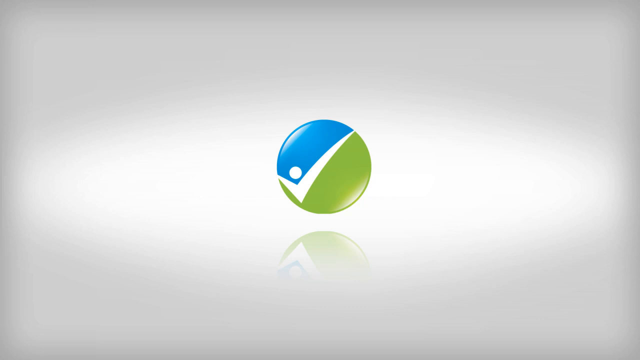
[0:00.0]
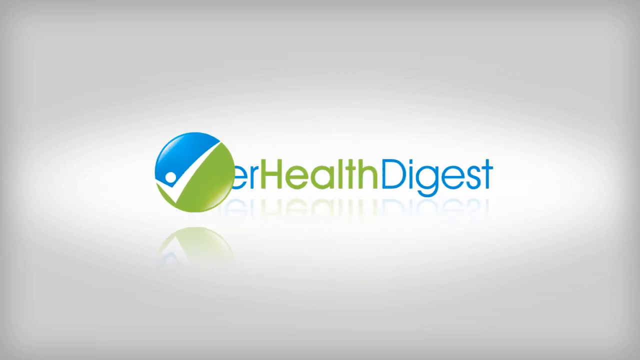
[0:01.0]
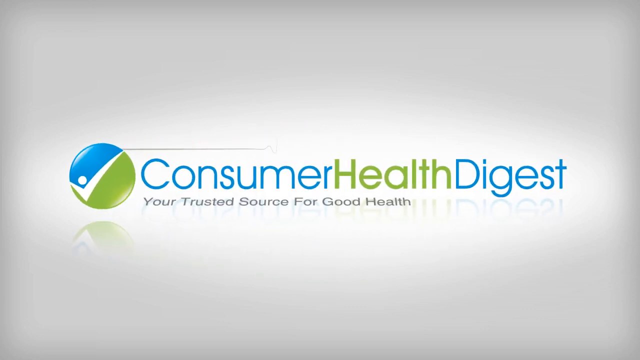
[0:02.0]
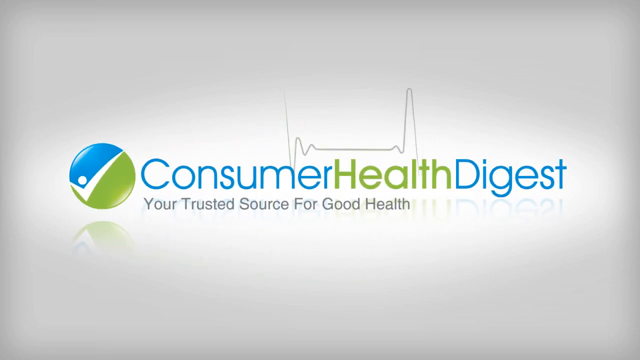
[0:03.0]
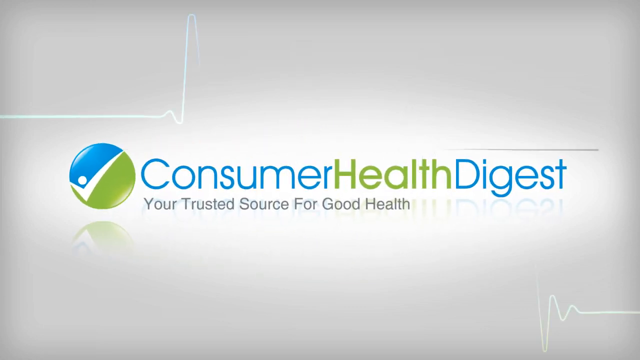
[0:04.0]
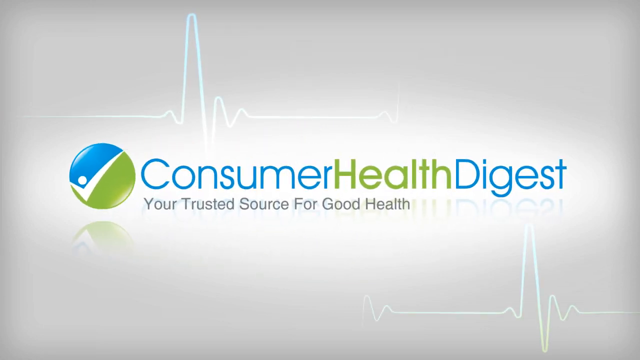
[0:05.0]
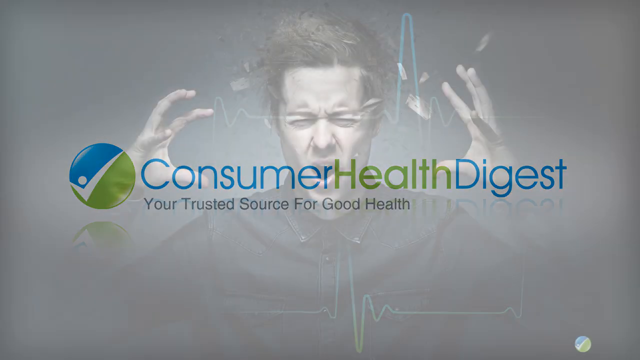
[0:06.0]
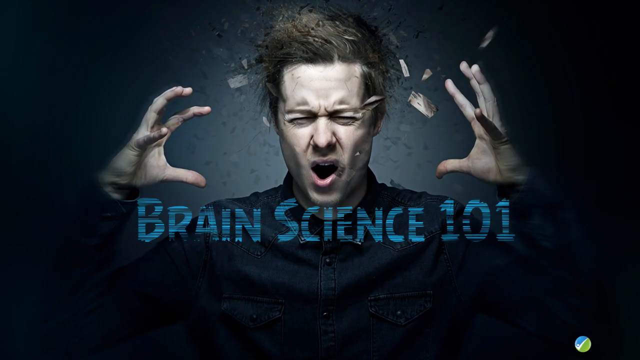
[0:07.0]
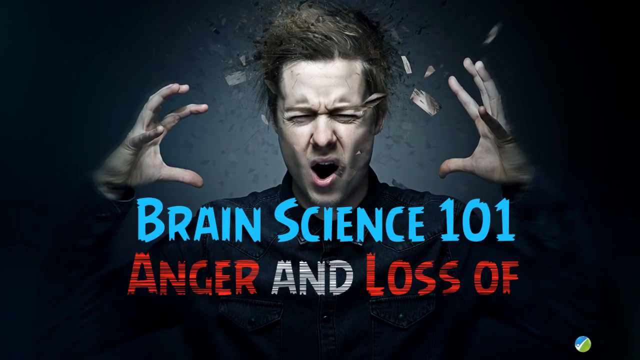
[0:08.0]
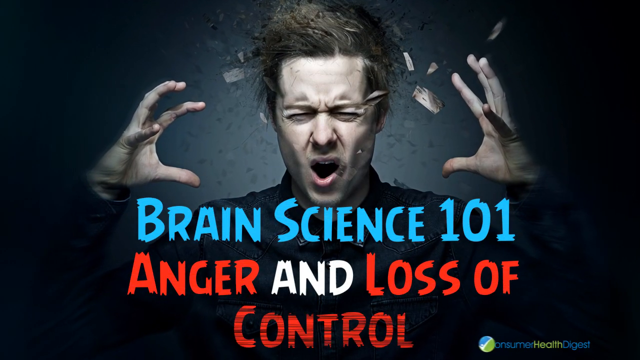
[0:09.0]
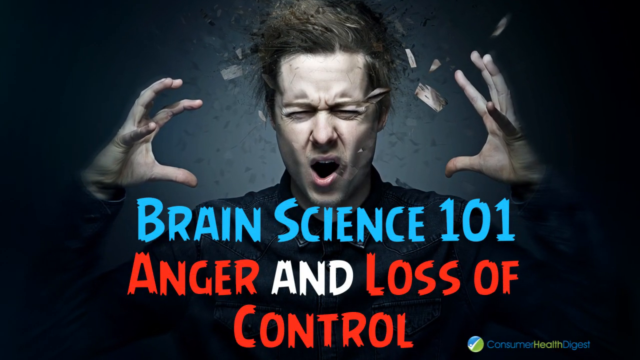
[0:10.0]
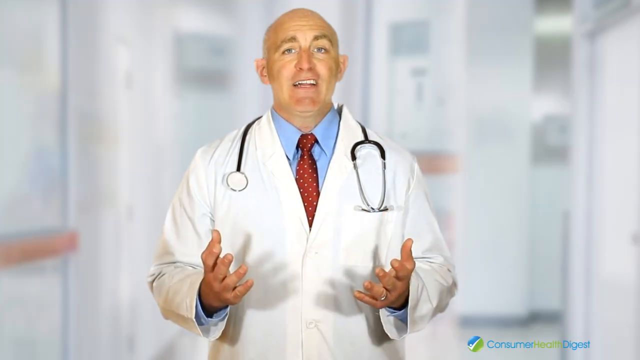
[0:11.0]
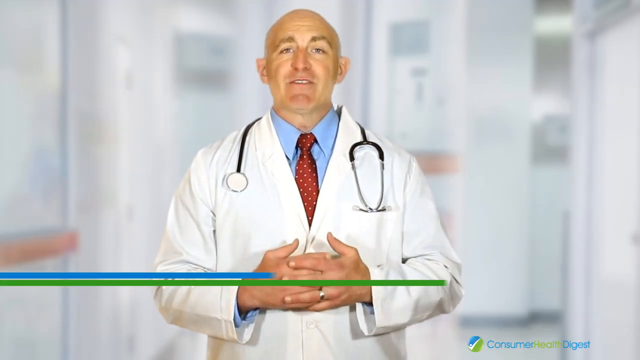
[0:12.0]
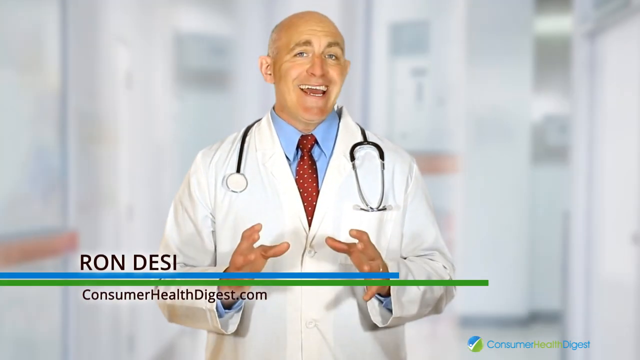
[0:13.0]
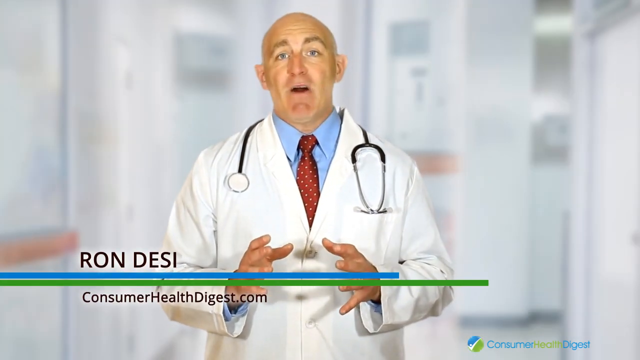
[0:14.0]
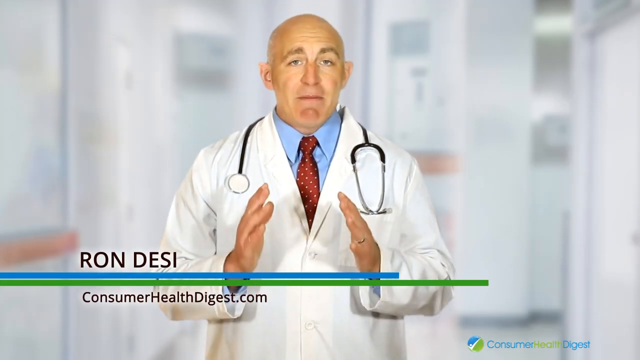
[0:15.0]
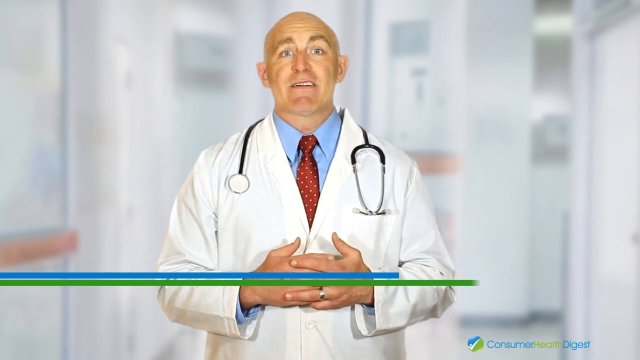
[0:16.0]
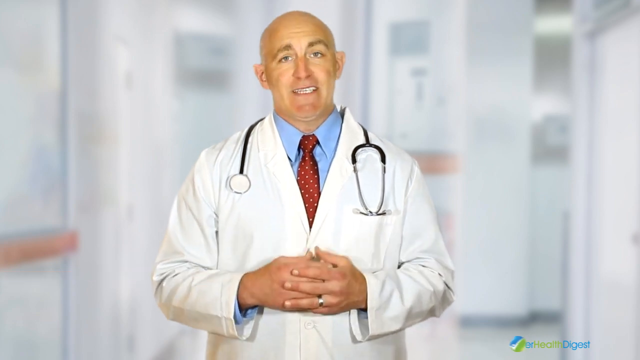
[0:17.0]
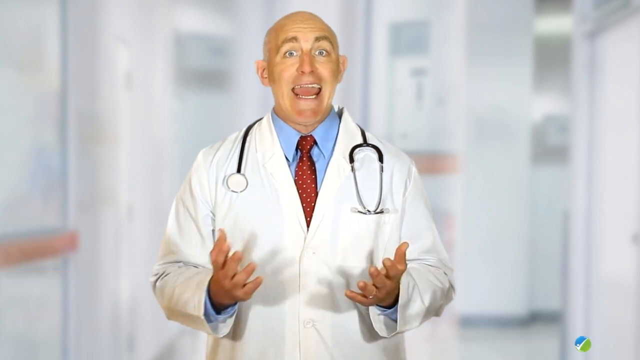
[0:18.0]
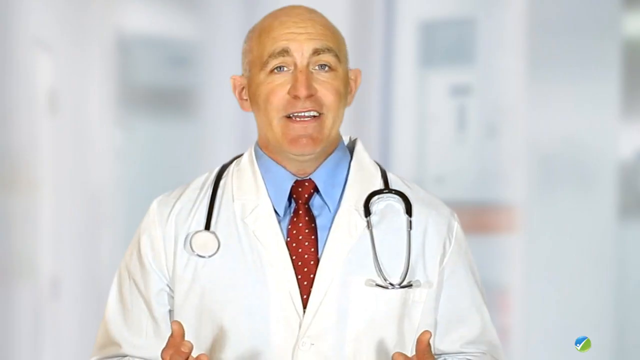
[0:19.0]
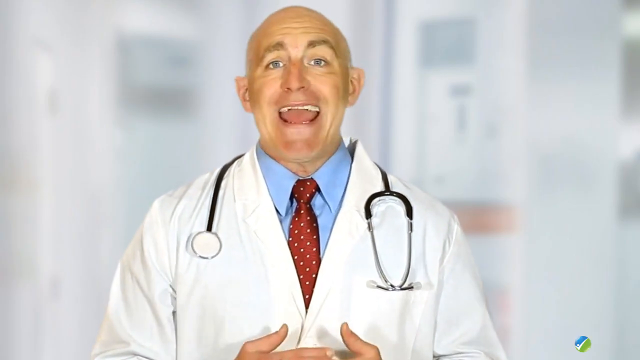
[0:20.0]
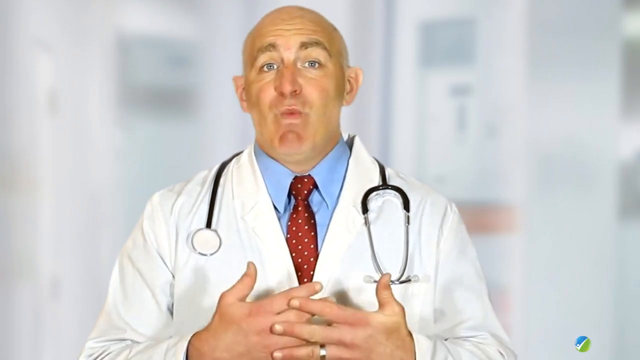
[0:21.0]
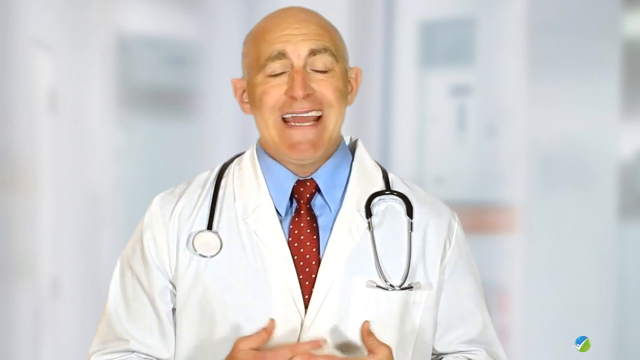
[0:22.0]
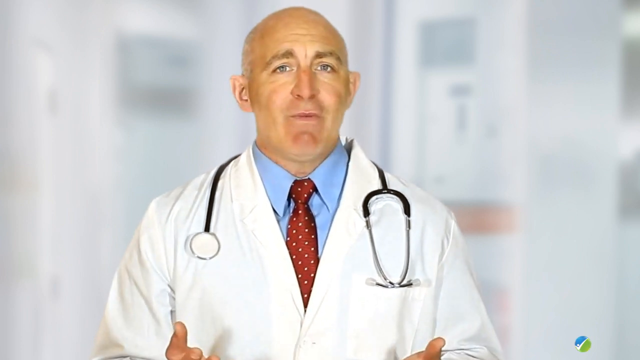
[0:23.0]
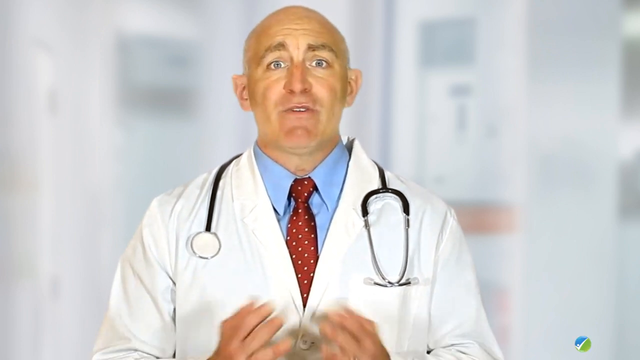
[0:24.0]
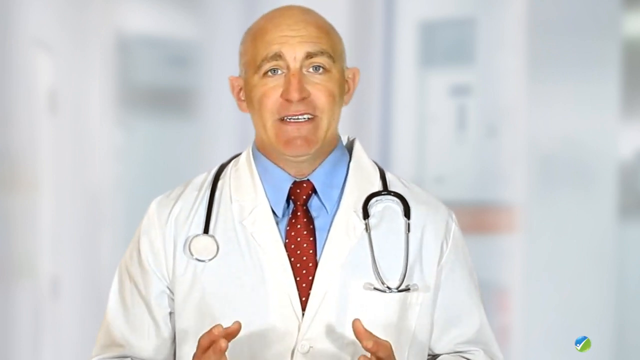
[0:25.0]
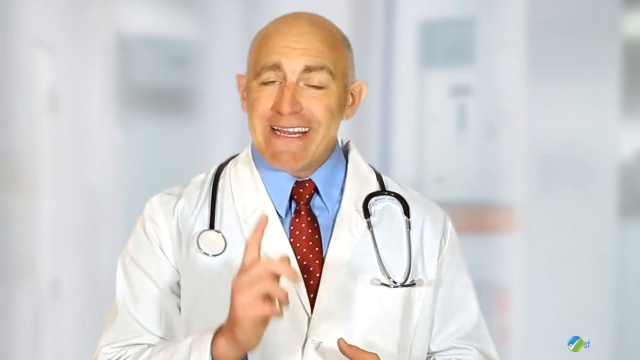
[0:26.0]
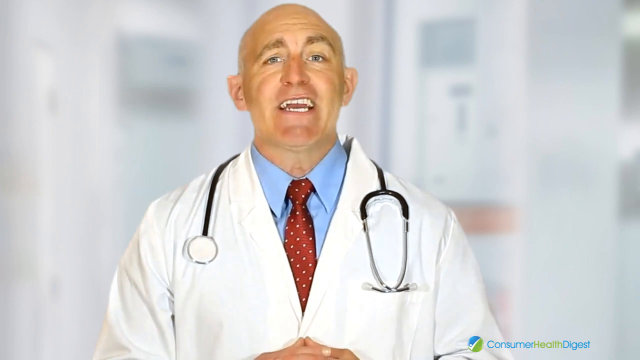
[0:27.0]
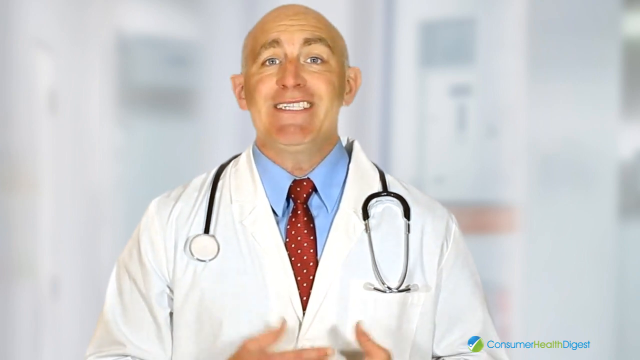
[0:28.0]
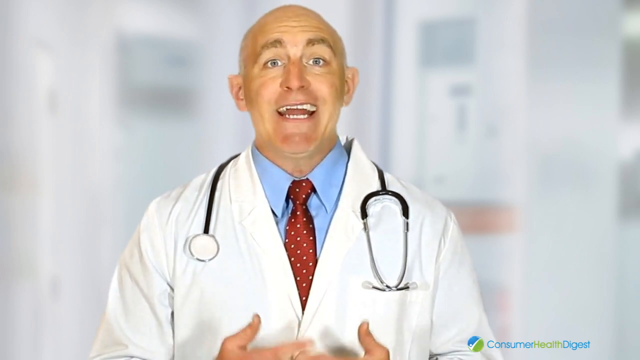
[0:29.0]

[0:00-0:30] The video opens with a logo for Consumer Health Digest: "Consumer" is in blue font, "Health" in green font, and "Digest" in blue font. Underneath, text reads "your trusted source for good health." To the left is a circle with a white check mark; the circle space above the check mark is blue and the space below it is green, with a tiny white ball in the corner of the check mark in the blue area. The video then switches to a graphic of a man who seems to have a pained look on his face, with the words "brain science 101" in red font. It then cuts to an image of a doctor, an older, bald white person wearing a lab coat, a stethoscope, a blue button shirt, and a red tie with yellow dots.